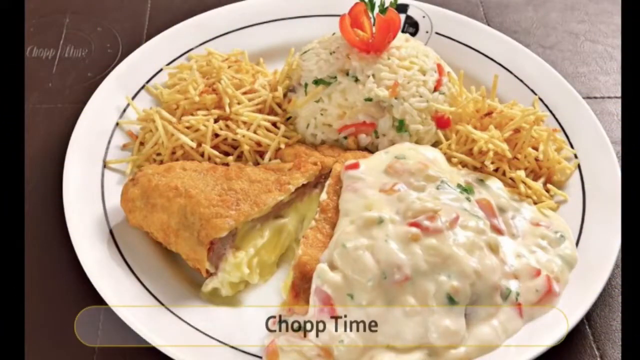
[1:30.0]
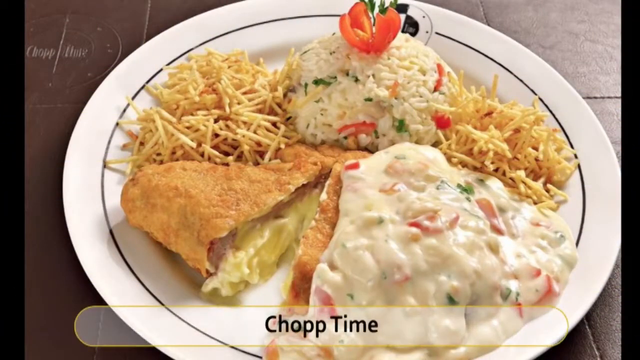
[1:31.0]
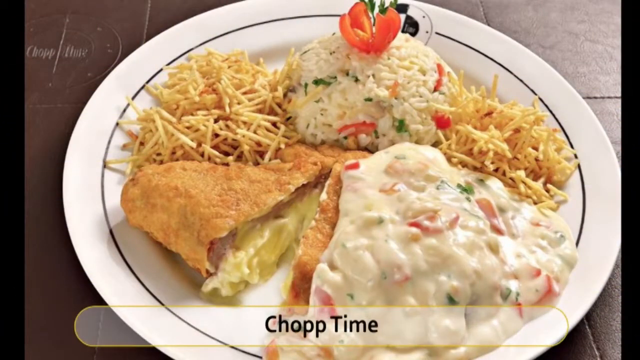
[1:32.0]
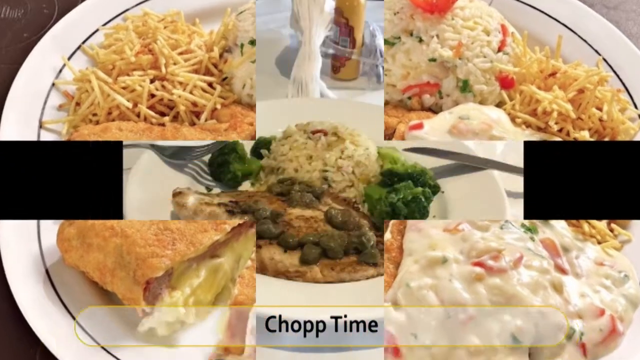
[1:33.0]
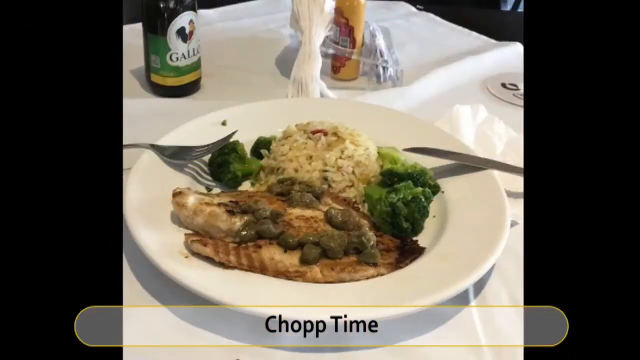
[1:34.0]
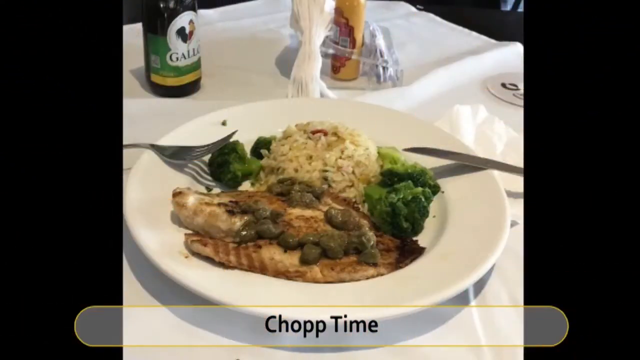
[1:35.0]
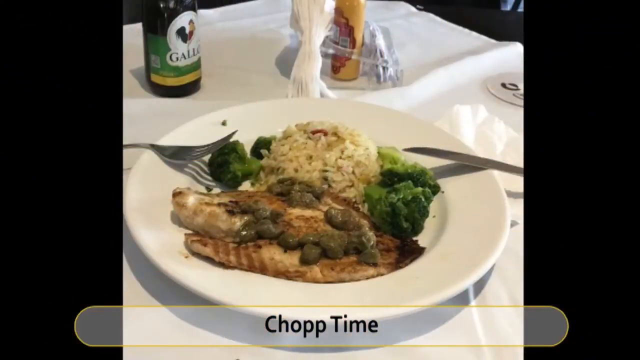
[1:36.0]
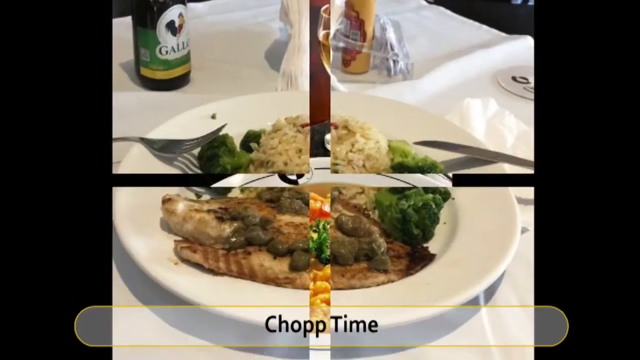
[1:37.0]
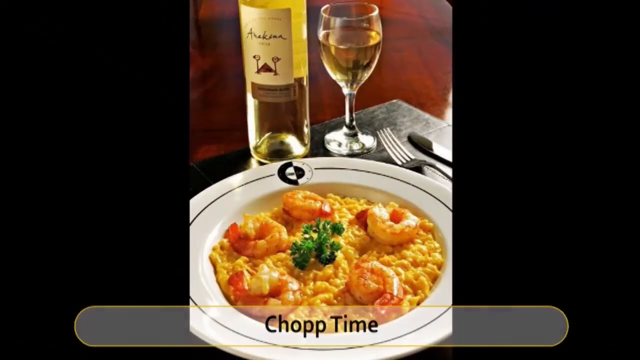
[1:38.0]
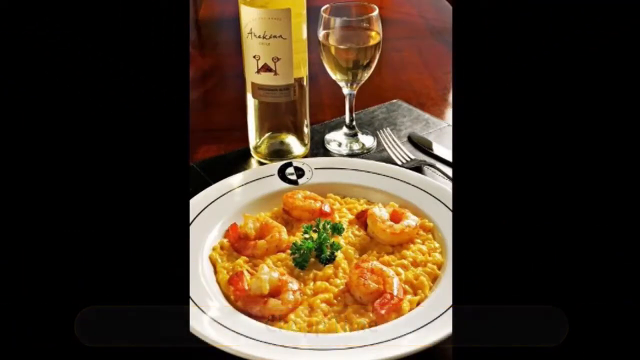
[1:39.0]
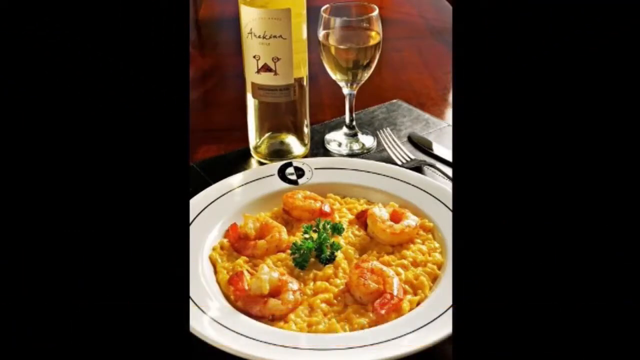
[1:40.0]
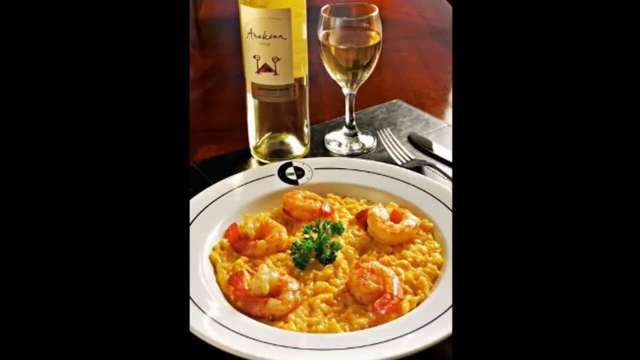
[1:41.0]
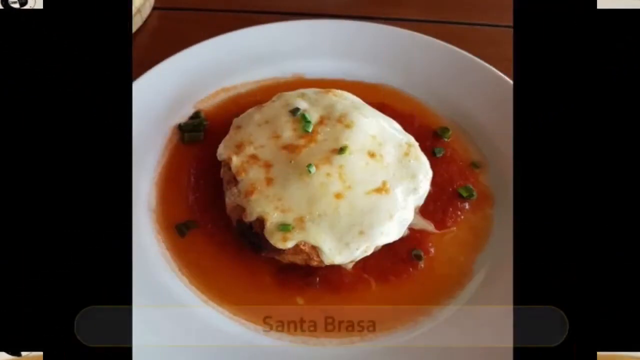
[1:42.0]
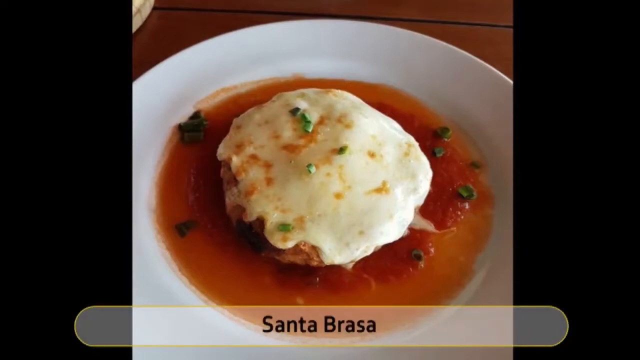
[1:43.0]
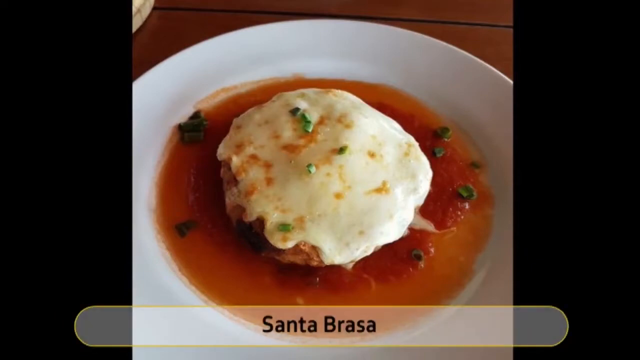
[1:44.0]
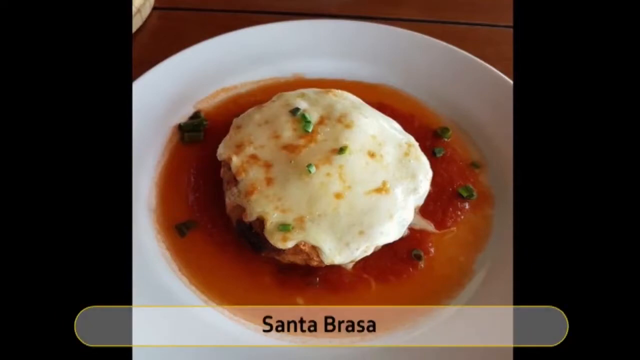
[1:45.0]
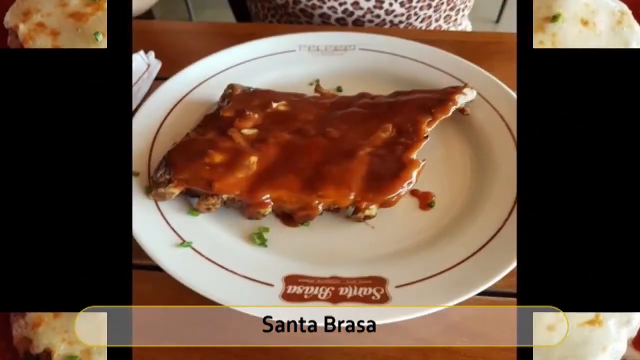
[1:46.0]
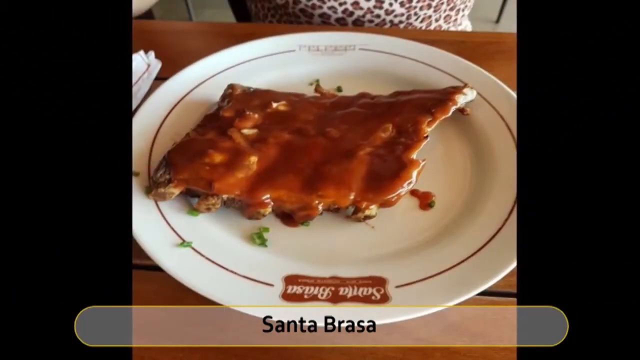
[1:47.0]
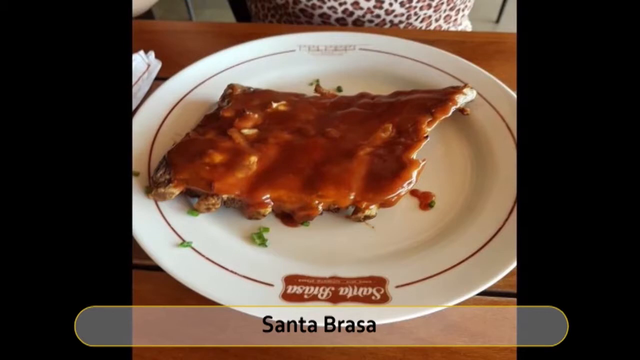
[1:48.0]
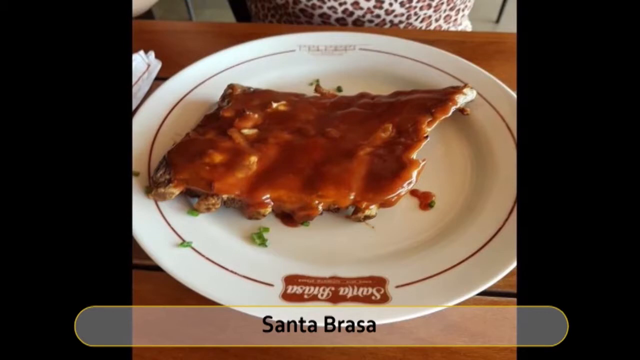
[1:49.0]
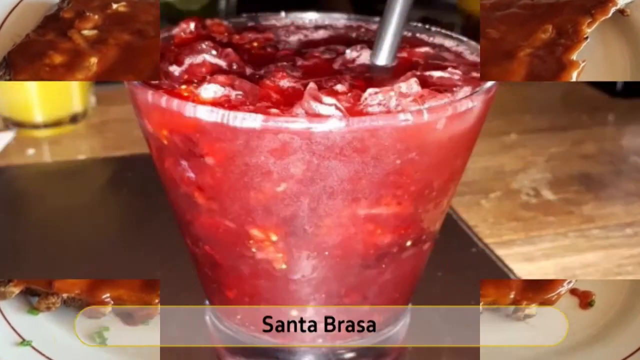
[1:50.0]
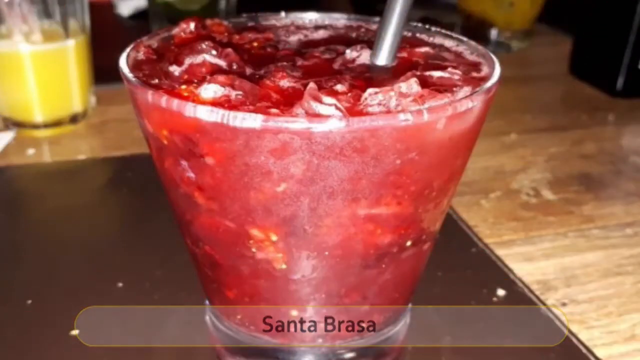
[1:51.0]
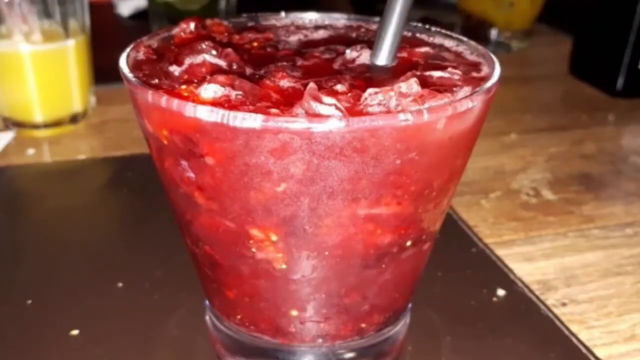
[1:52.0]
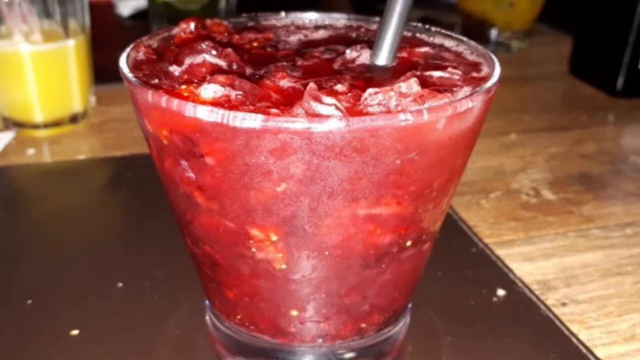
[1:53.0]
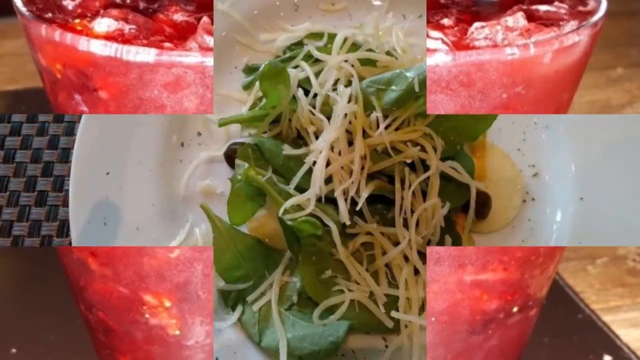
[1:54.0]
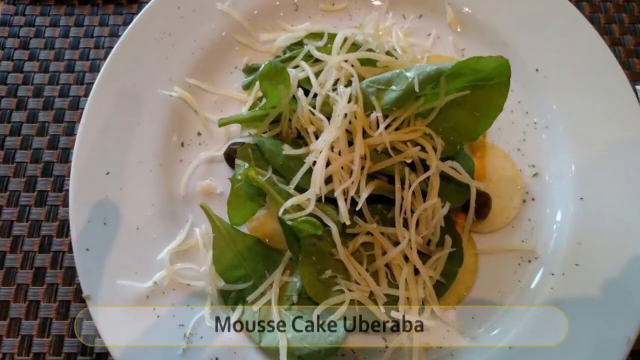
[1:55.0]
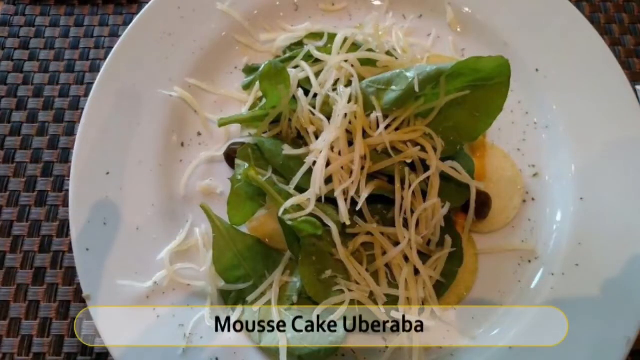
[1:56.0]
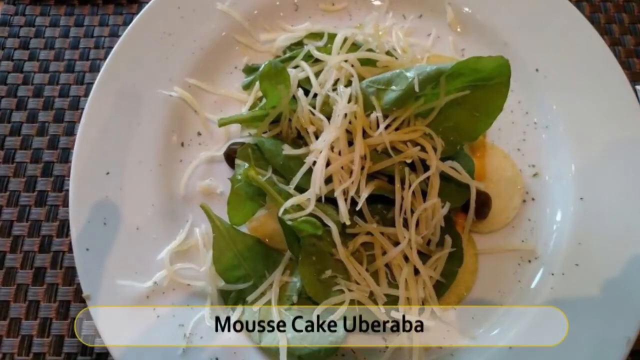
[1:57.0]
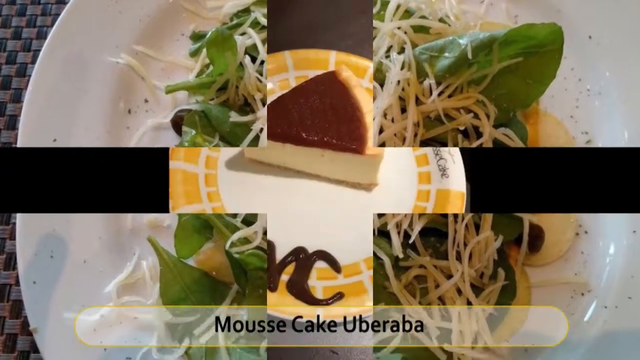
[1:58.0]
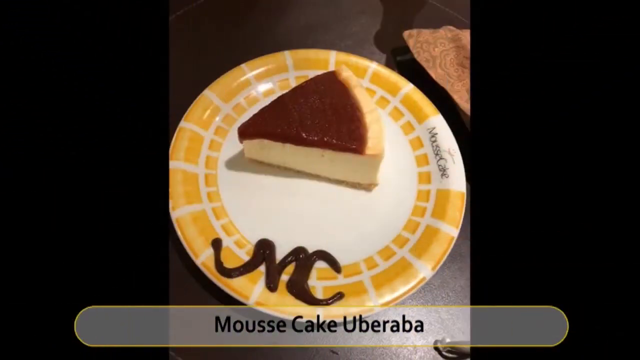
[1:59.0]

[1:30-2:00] The camera looks almost straight down at a plate of food. A transition separates the image and pulls it apart at the left corner, the right corner, the bottom left corner and the bottom right corner, revealing the image behind it: a different plate of food. Another transition shows yet another plate of food. The video stays on certain food plates for a few seconds, and also shows a drink and some dessert. The drink is shown in close-up and looks to have a metal straw in it, on the right side of the drink.